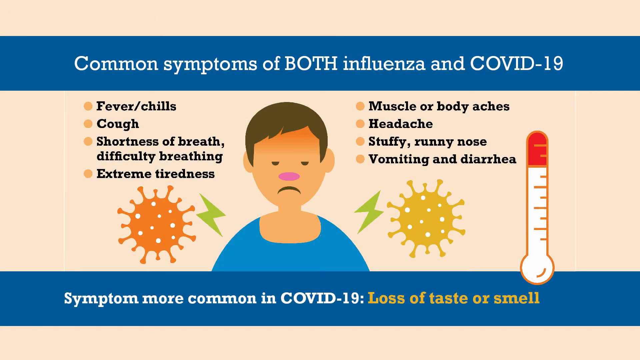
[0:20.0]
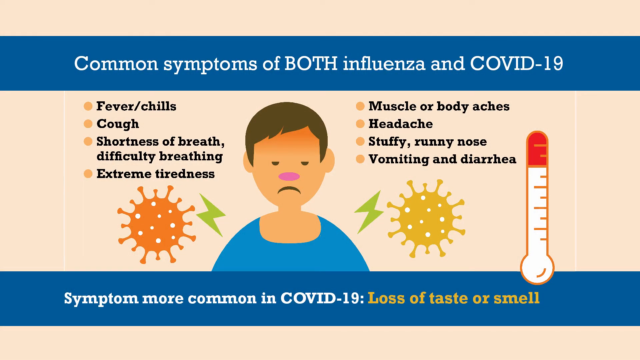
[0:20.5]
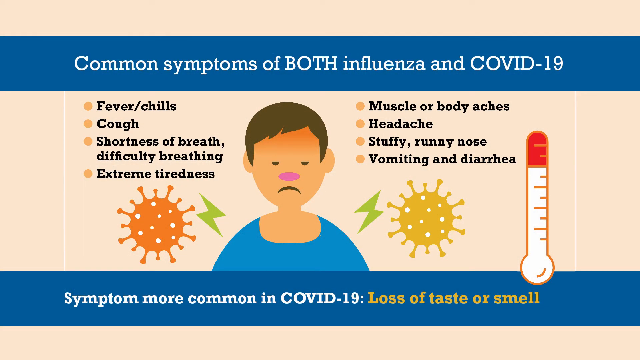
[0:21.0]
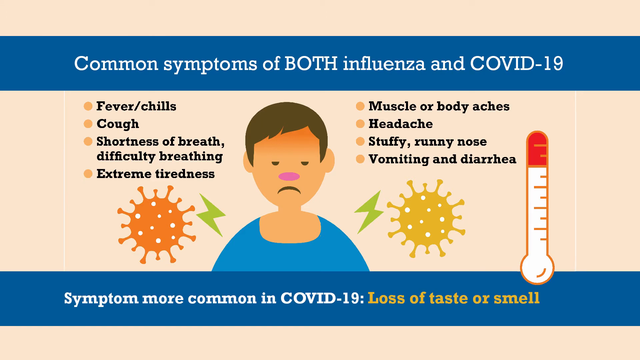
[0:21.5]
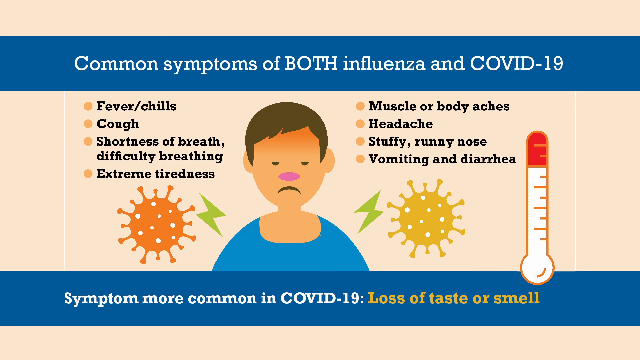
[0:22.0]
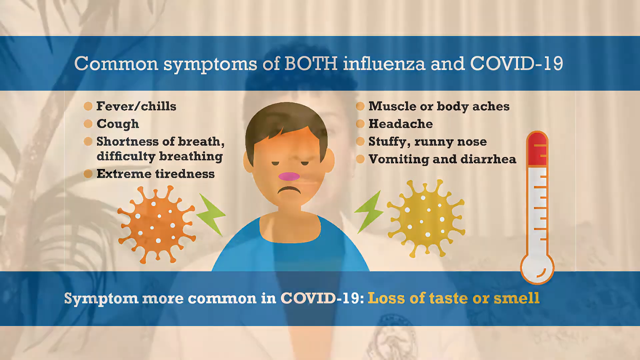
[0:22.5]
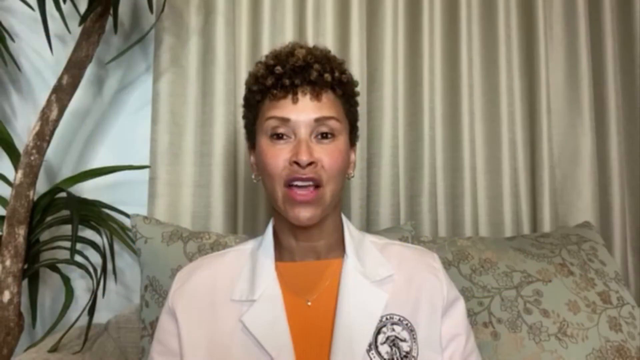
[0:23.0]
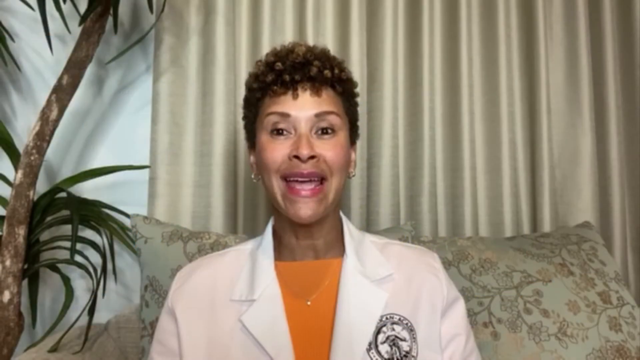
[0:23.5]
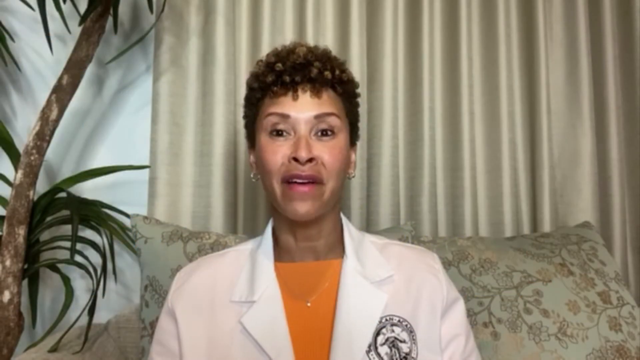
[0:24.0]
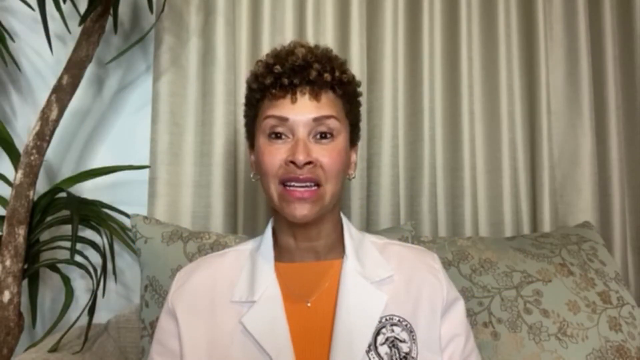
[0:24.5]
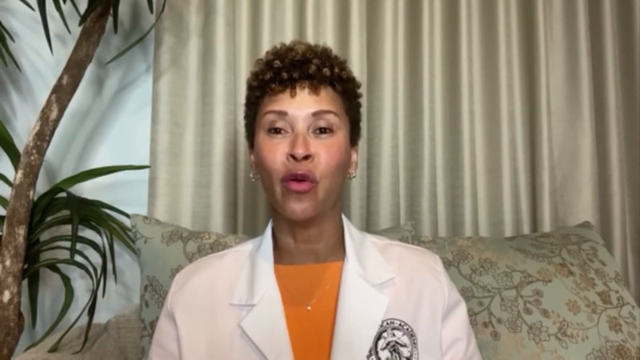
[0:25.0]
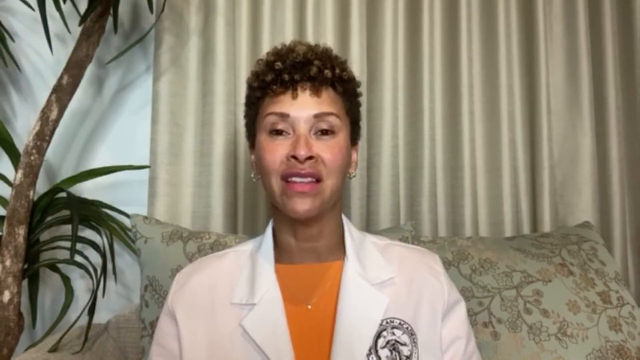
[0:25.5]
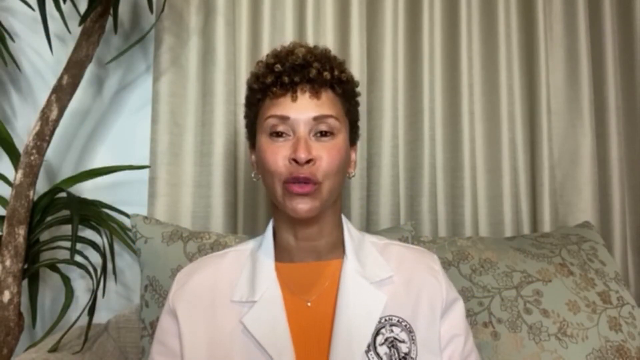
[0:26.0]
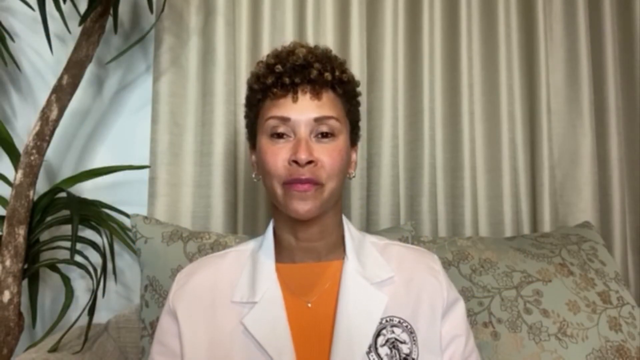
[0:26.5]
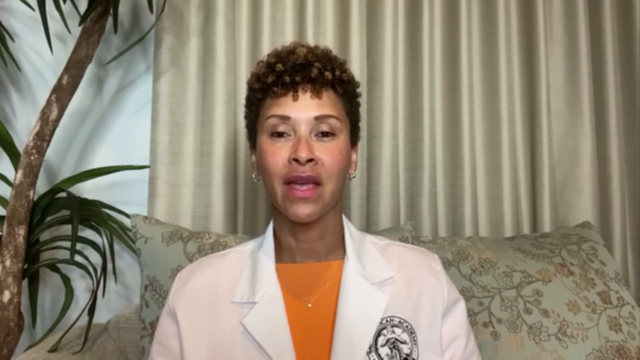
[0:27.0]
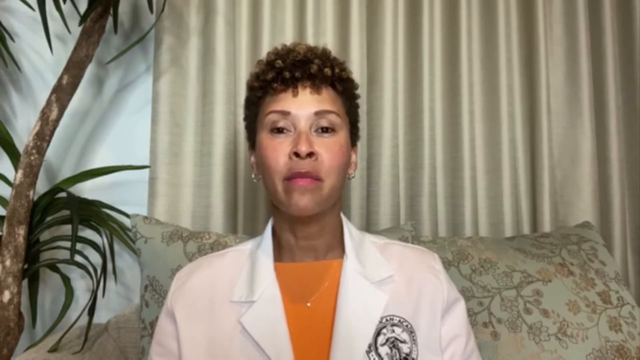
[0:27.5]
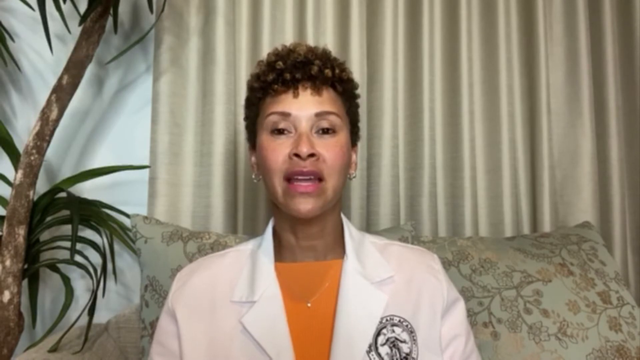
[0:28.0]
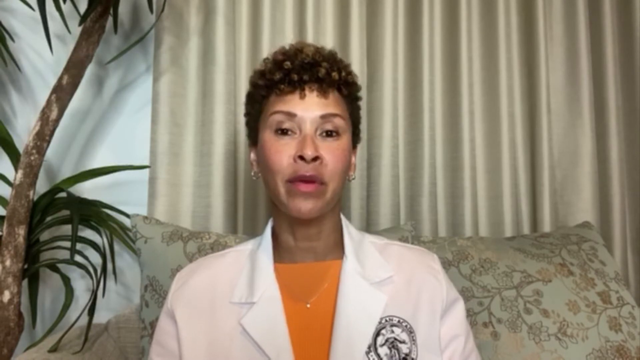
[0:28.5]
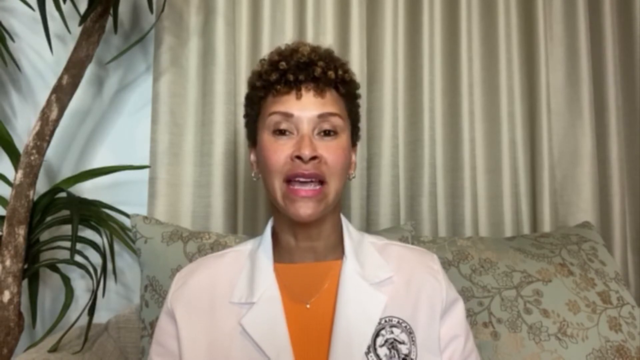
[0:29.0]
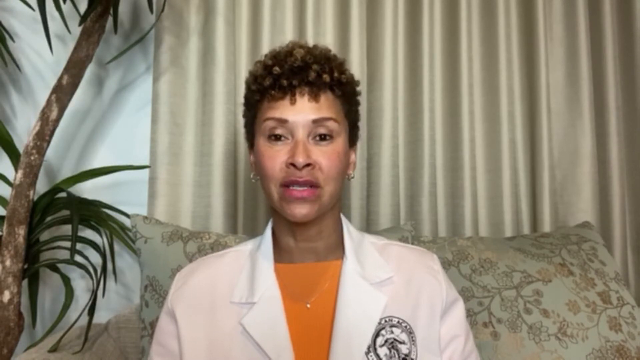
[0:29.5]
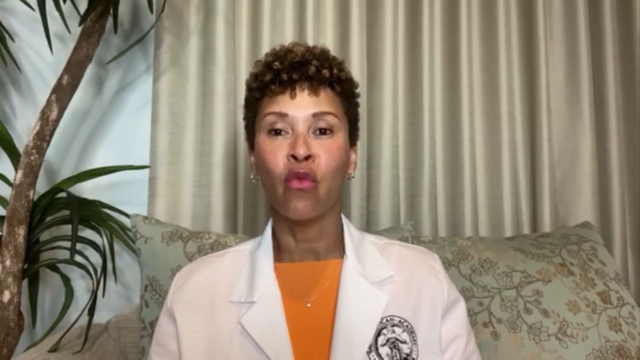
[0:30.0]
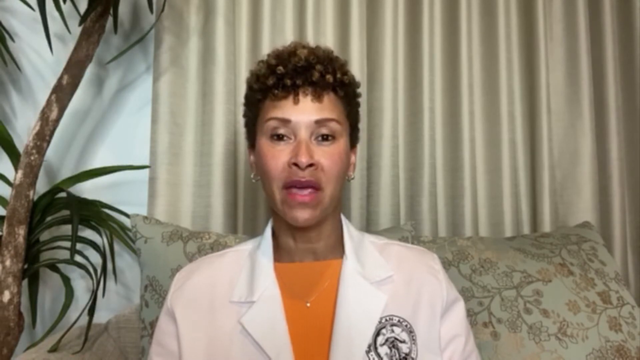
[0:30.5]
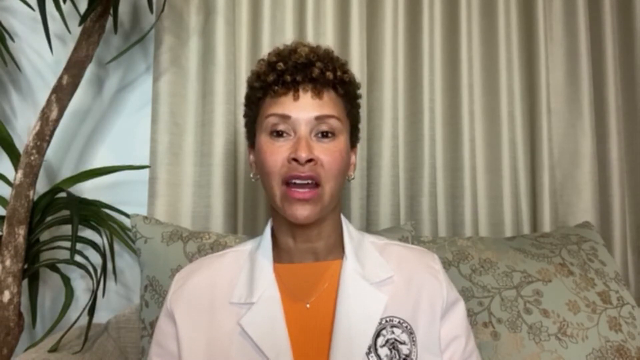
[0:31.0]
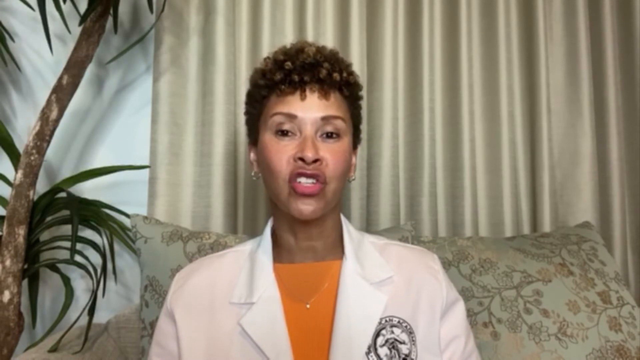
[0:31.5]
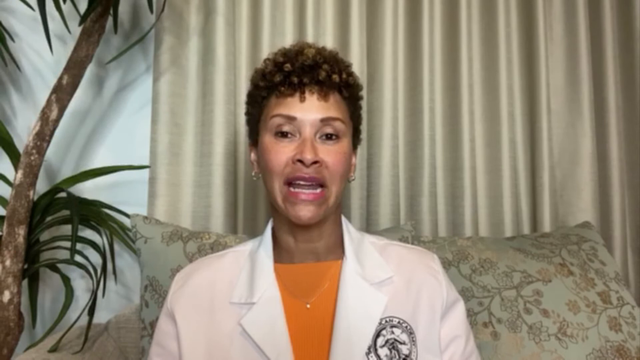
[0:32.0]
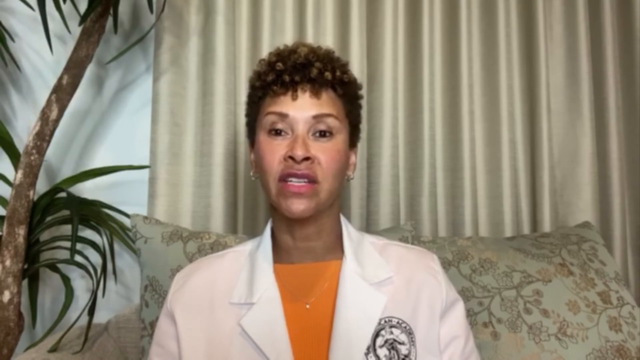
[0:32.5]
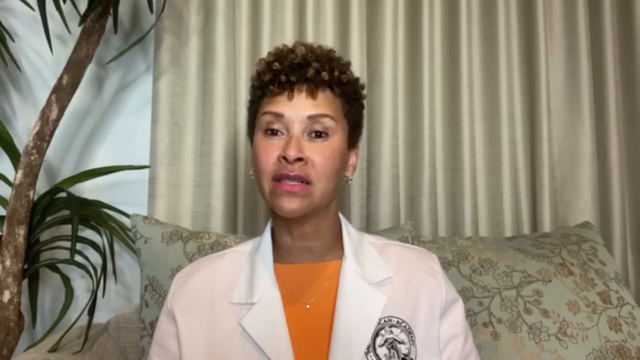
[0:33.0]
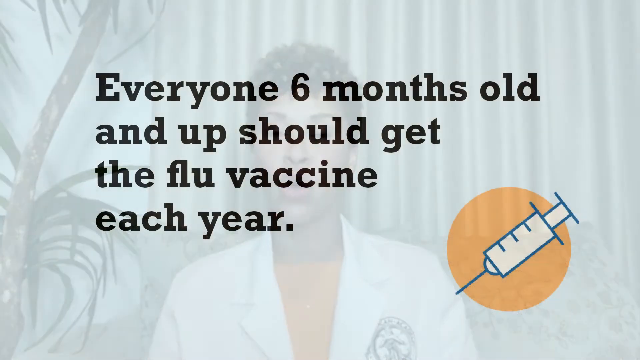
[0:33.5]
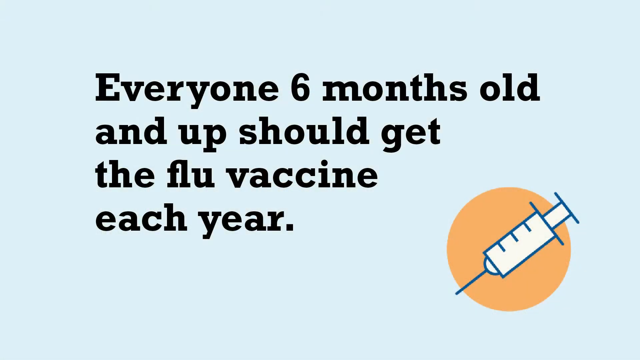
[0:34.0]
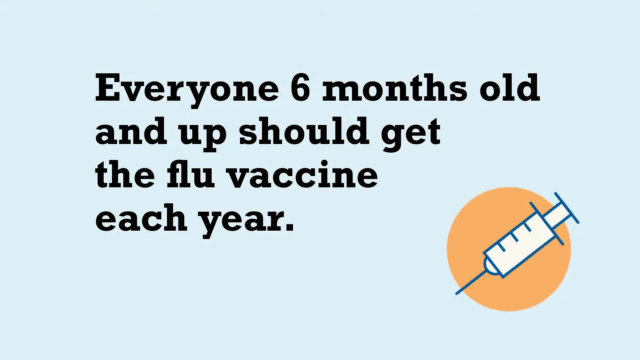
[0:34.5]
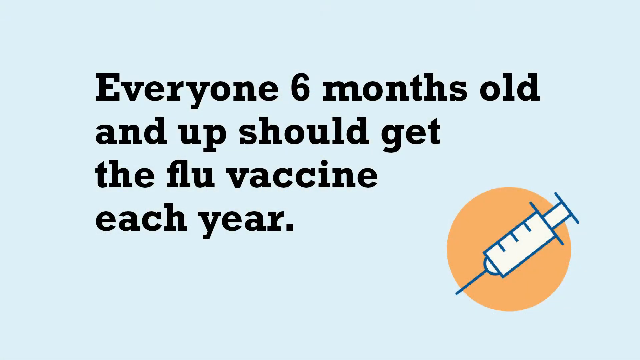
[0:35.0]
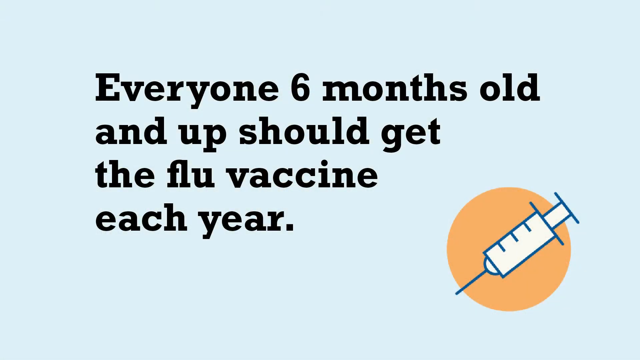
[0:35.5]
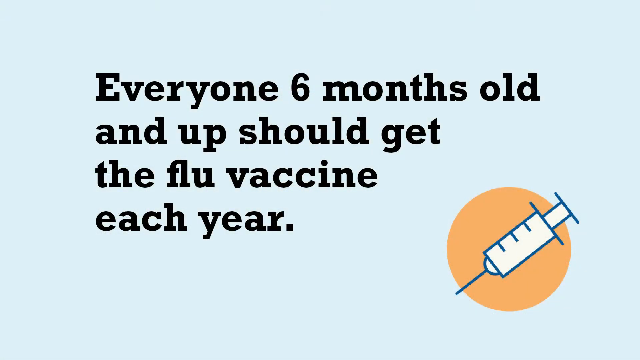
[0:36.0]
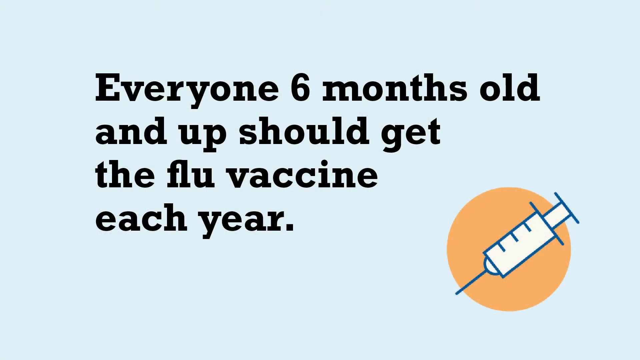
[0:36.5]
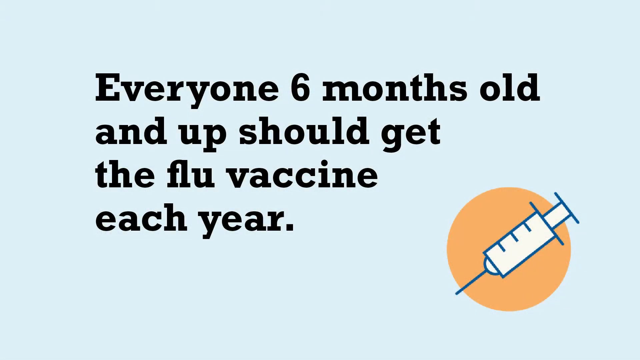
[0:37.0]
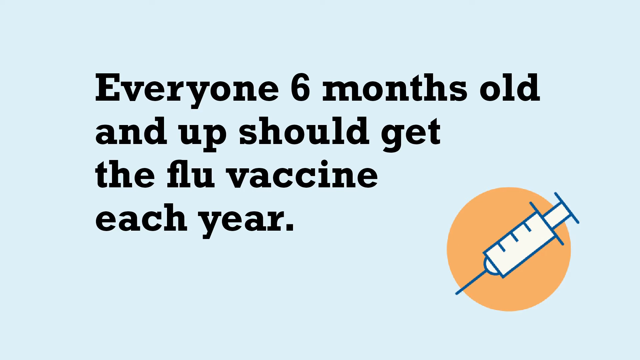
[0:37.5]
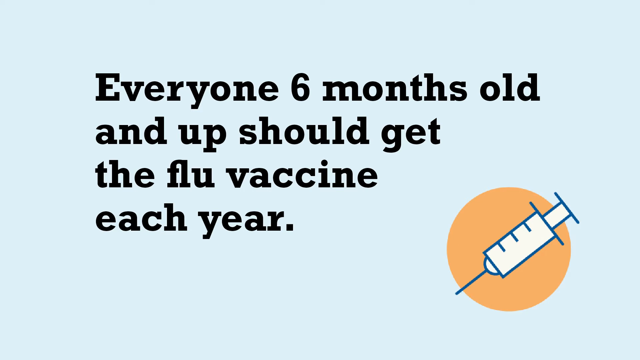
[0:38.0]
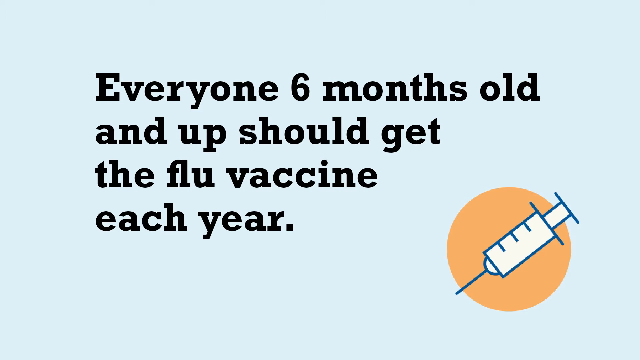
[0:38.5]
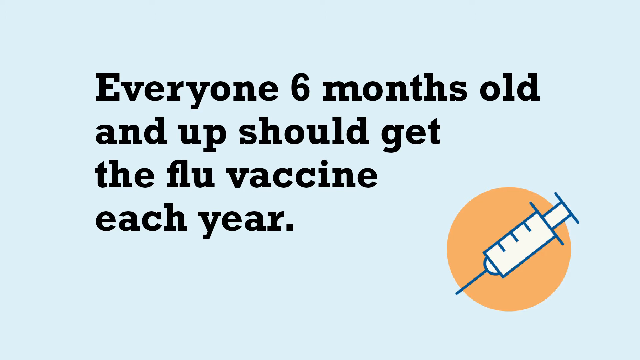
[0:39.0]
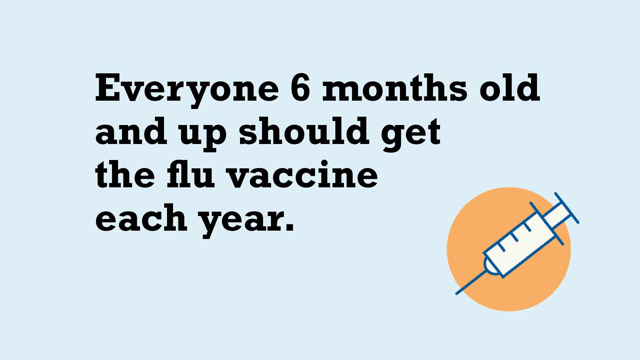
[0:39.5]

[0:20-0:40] An infographic shows a picture of a sick person who has either the flu or COVID. At the top, a blue banner runs from left to right with white text that says "common symptoms of both influenza and COVID-19." Beneath it, in the center of the image to the left, are orange bullet points with black text reading "fever / chills, cough, shortness of breath, the difficulty breathing, extreme tiredness." To the right of him are four more bullet points with black text reading "muscle or body aches, headache, stuffy runny nose, vomiting and diarrhea." To the right of that is a thermometer showing the very top in red and the bottom two-thirds in white. COVID spore-looking things appear on either side of the sick patient: the one on the right is mustard yellow with white spots, and the one on the left is orange with white spots. At the bottom, a blue banner runs from left to right with white text that says "symptom more common in COVID-19," followed by yellow text that says "loss of taste or smell," with a white underline beneath it. The video then pans back to the doctor, who is seated facing forward, speaking to the camera.